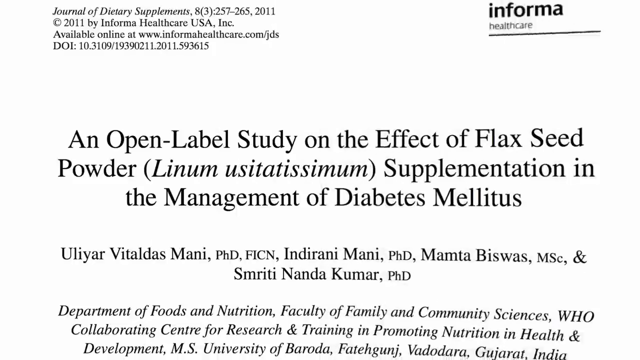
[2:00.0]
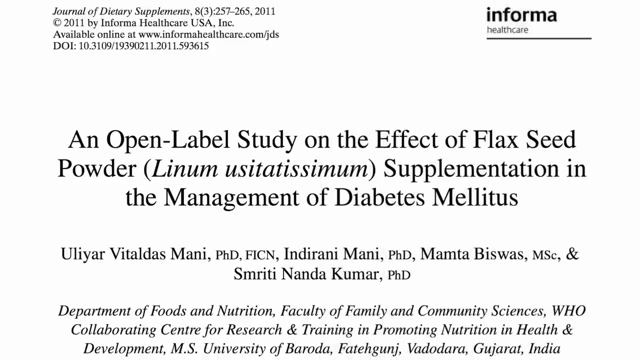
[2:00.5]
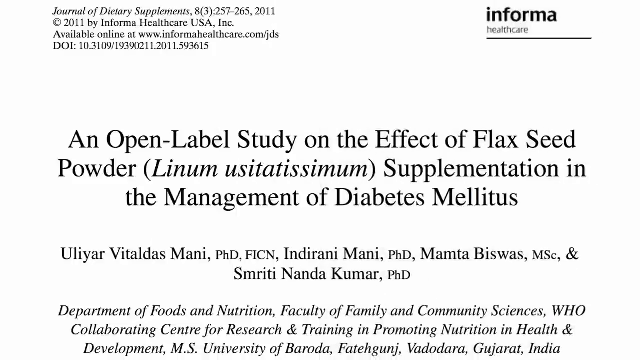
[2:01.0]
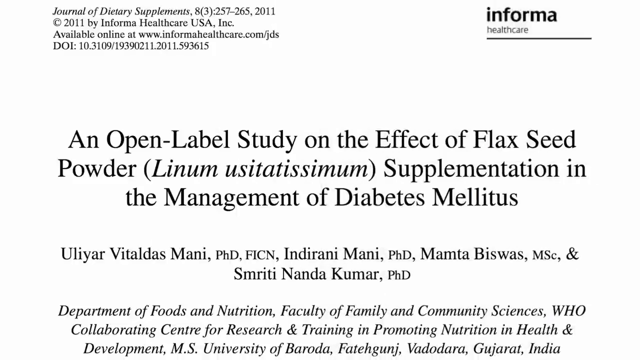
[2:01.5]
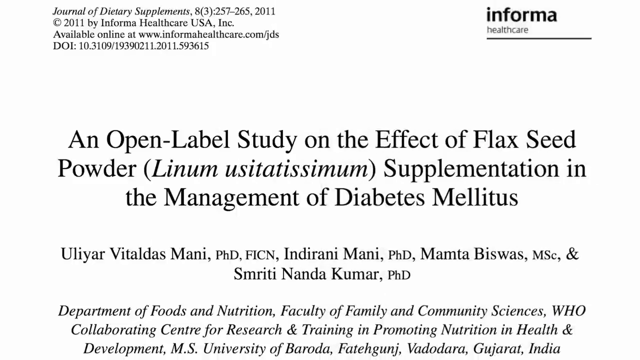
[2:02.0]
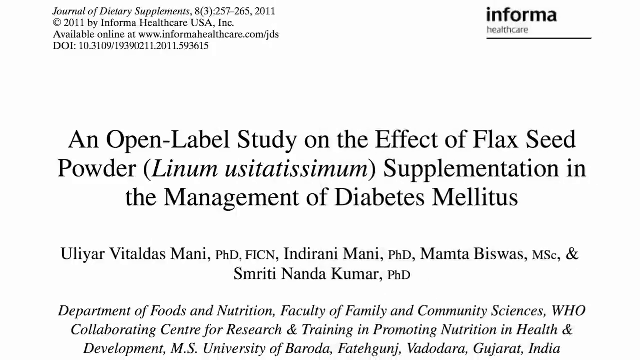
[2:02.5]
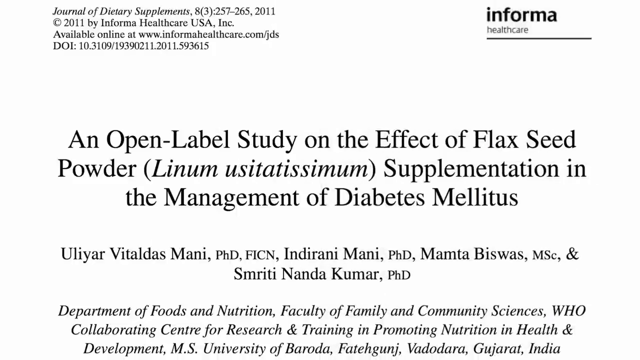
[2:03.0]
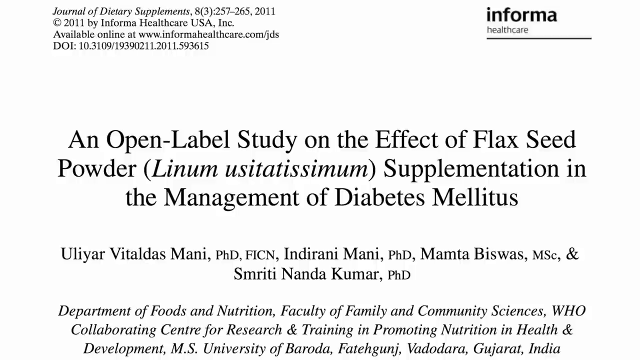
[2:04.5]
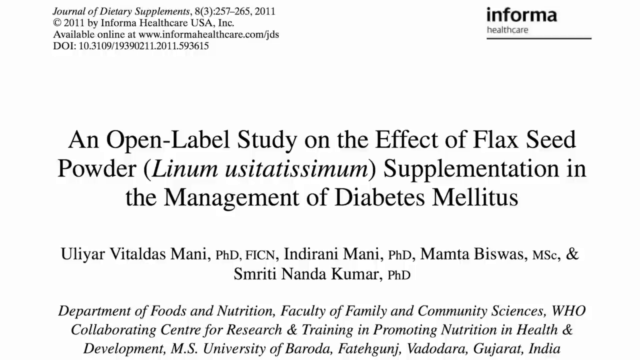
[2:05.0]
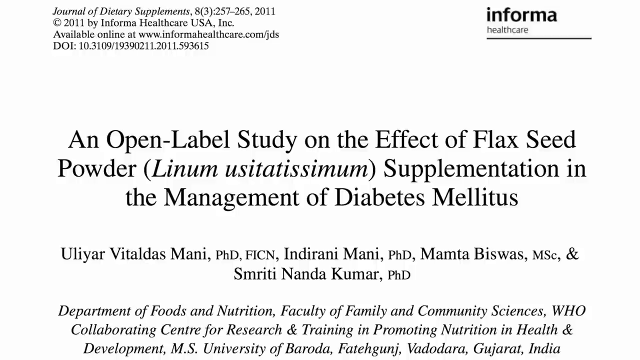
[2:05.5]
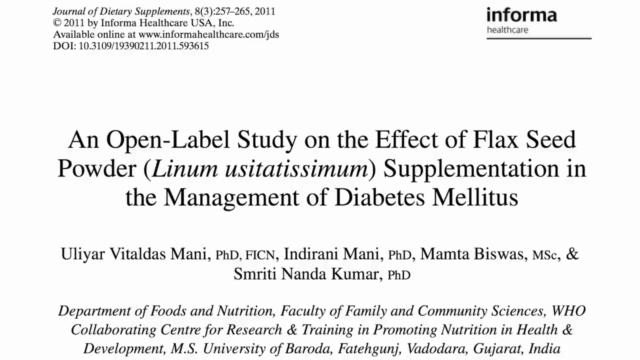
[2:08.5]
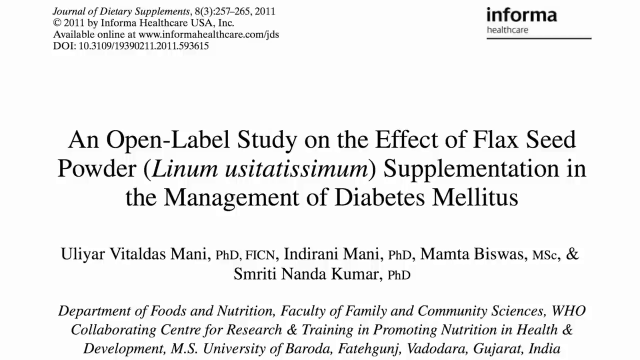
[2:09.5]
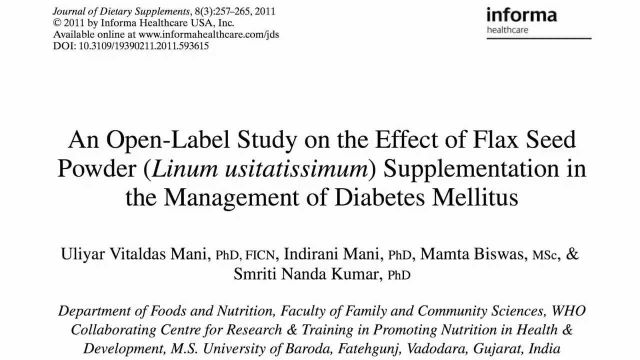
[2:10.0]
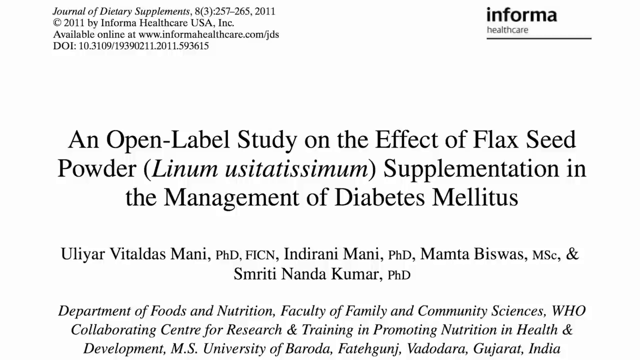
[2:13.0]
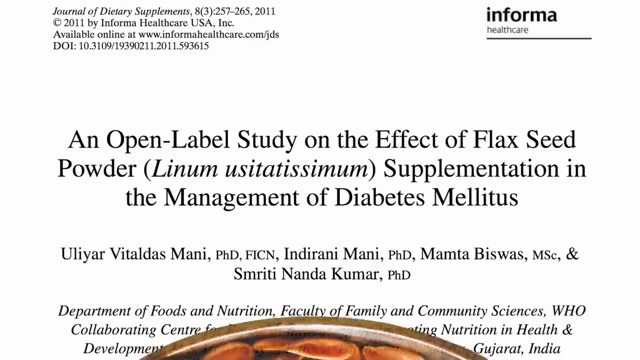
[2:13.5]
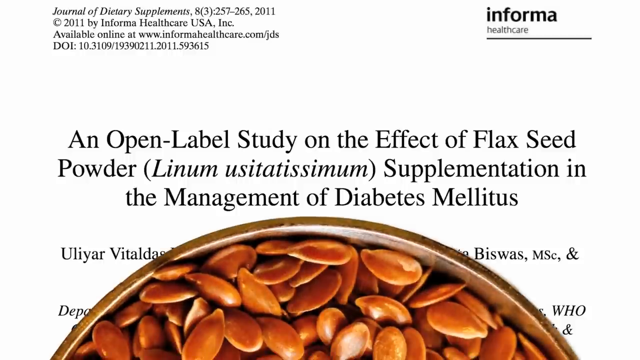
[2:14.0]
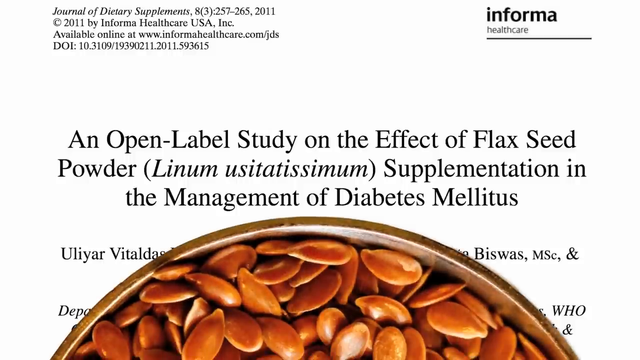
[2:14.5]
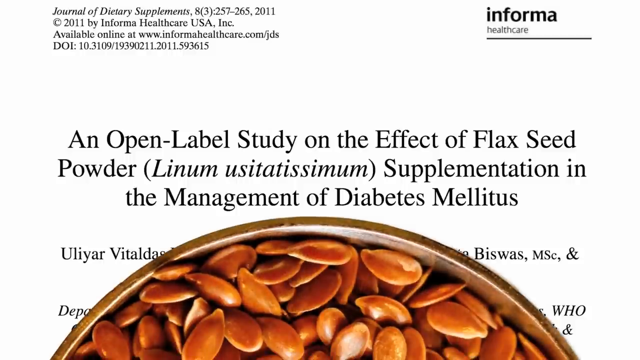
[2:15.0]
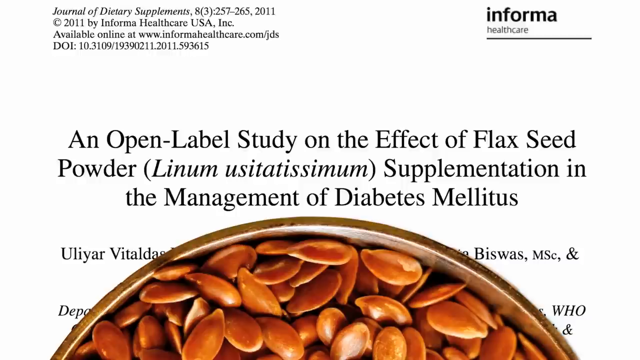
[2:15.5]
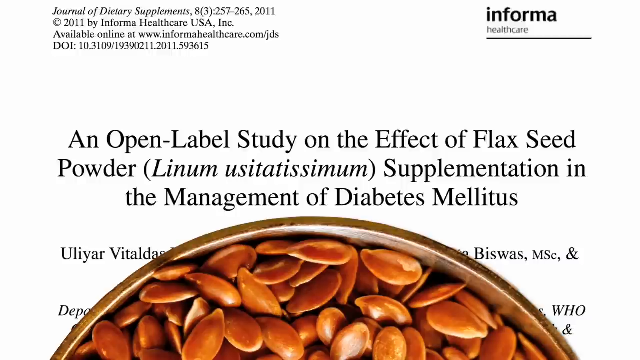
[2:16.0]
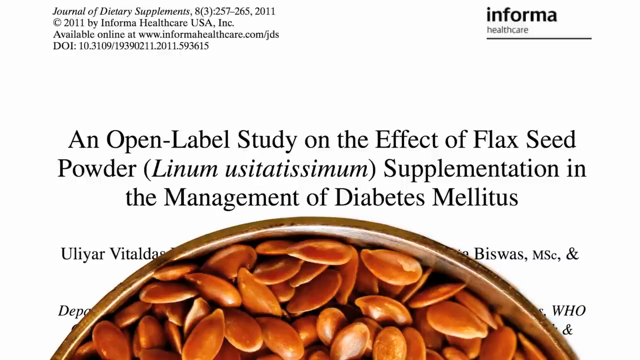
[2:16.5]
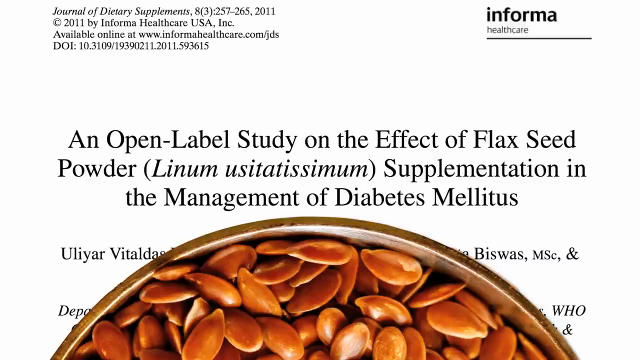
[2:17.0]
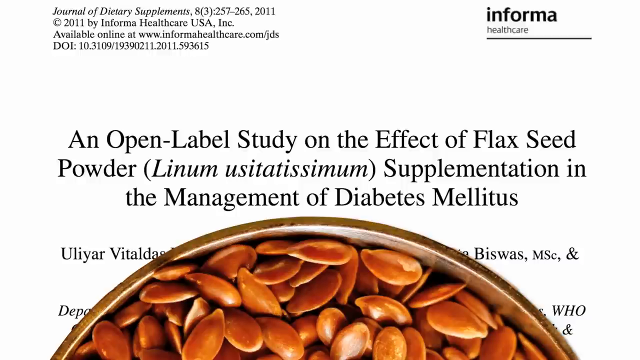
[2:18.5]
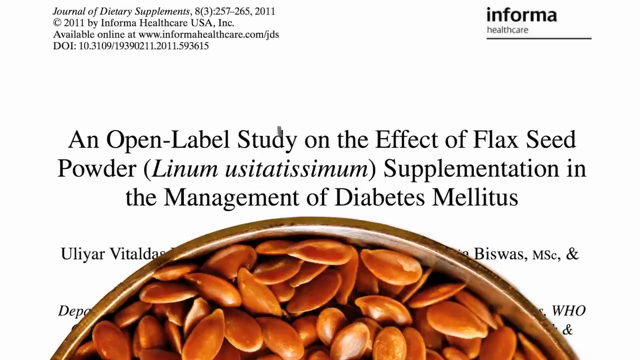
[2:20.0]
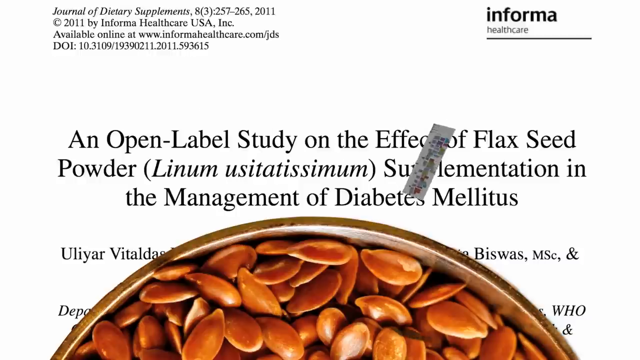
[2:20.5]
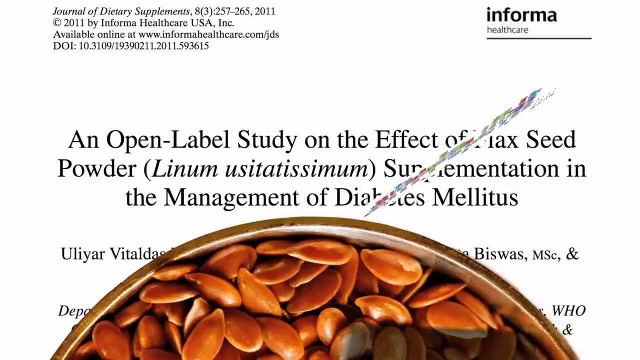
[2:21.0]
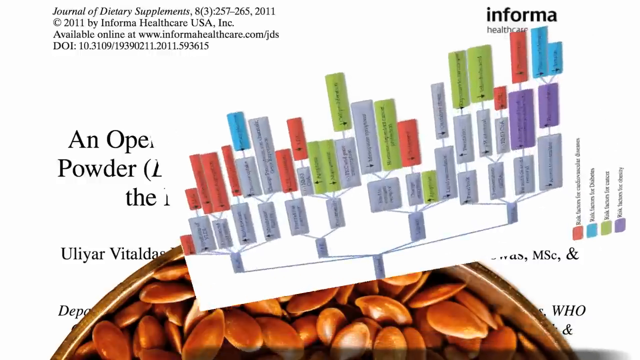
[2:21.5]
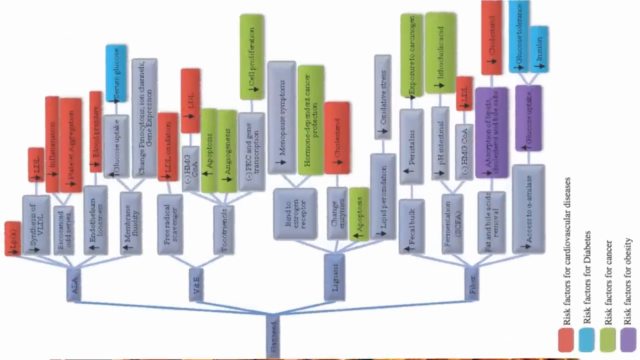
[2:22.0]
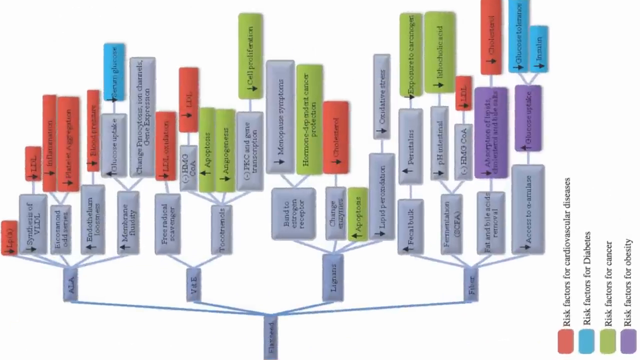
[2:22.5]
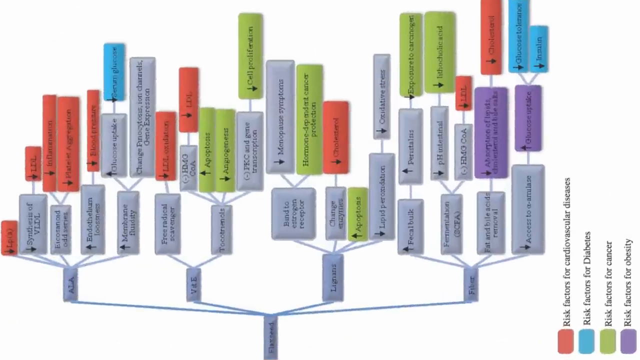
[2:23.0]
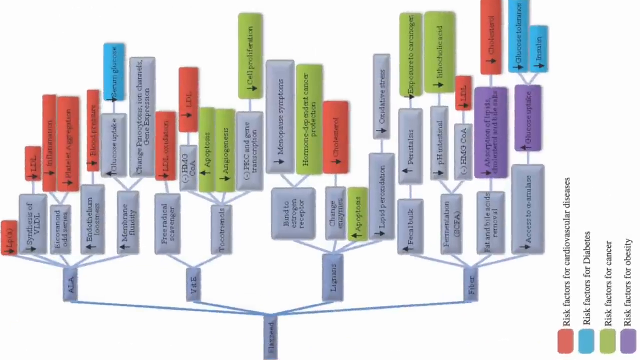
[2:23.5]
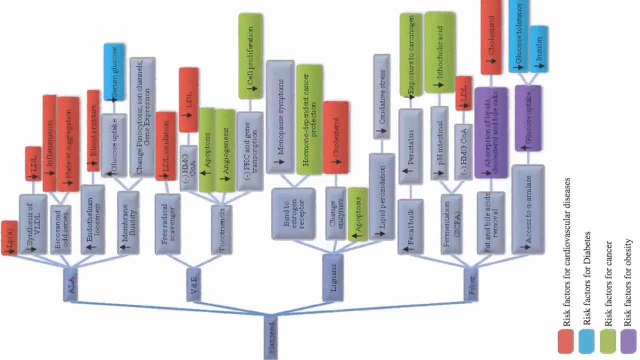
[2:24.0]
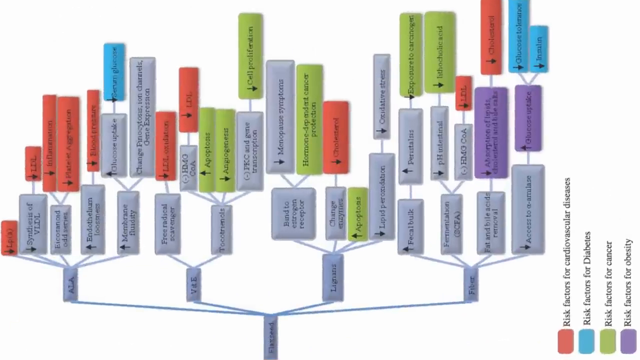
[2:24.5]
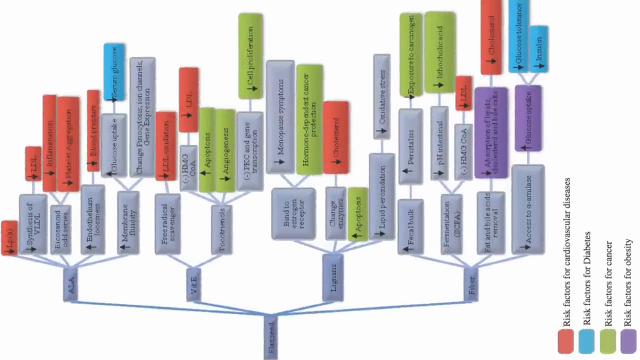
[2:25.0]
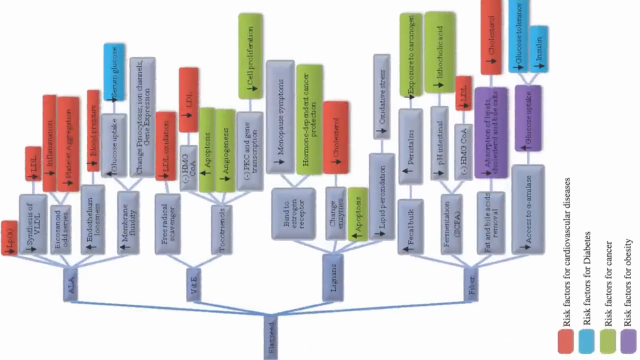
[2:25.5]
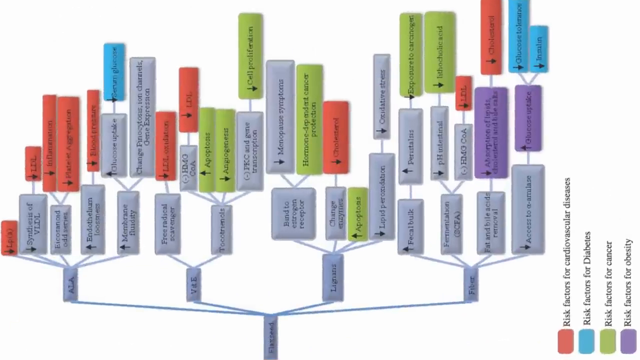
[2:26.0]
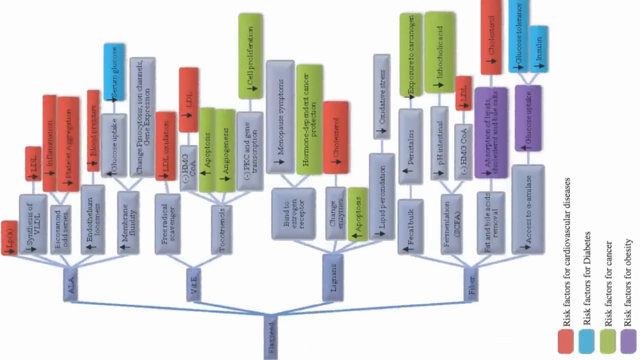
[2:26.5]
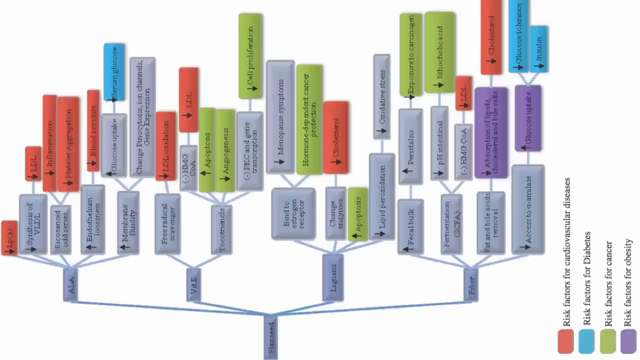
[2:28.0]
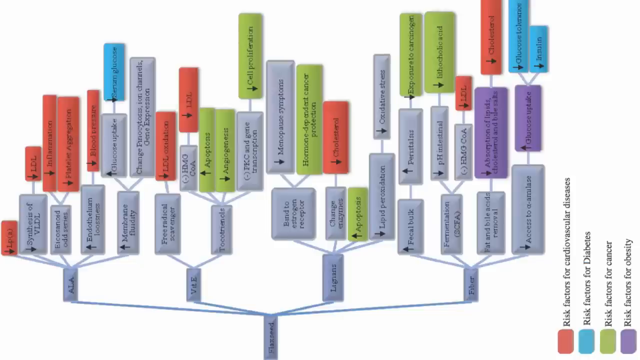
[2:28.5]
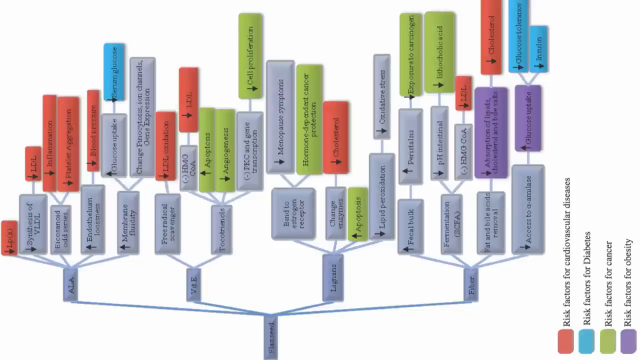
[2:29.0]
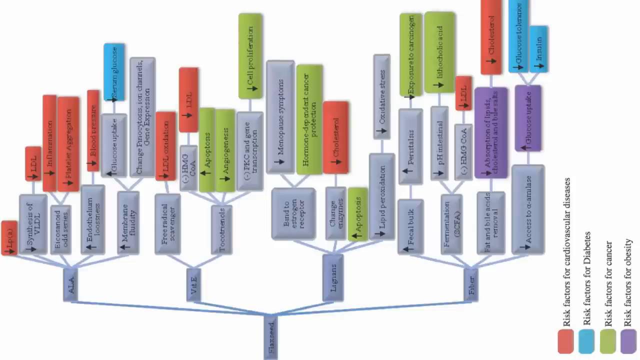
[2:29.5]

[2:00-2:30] A study heading reads "an open-label study on the effect of flaxseed powder supplementation in the management of diabetes mellitus", followed by the names of the people involved, which look a lot like Indian surnames. At the bottom of the screen the bowl peers out, with only its side and a few seeds visible; the seeds appear to be black flaxseed. A sort of spider diagram about diabetes then pops up on screen, lying on its side: it is in a portrait shape, tilted so that the bottom of the diagram is on the left side of the page. Some of its tabs are grey, some red, some blue, some green and some purple.